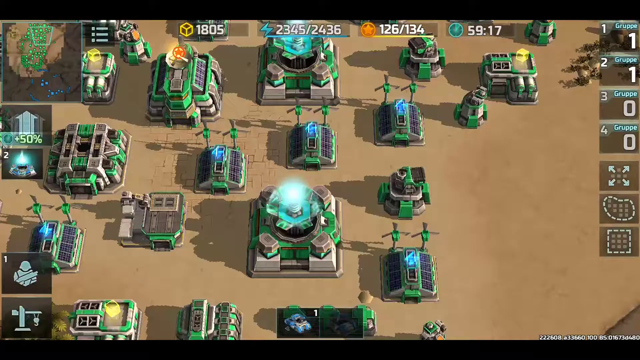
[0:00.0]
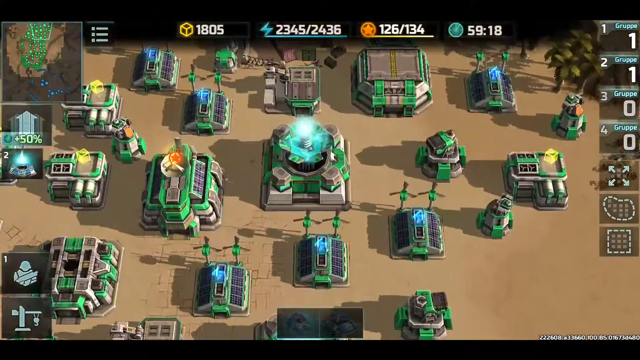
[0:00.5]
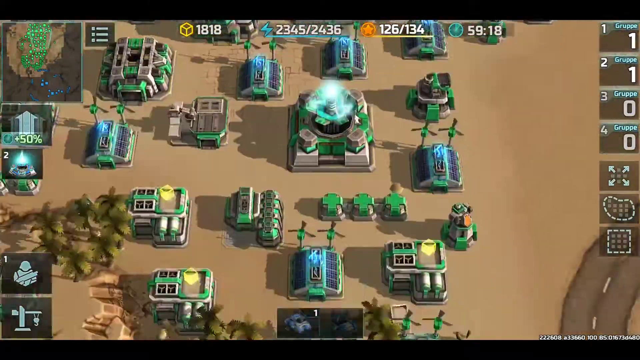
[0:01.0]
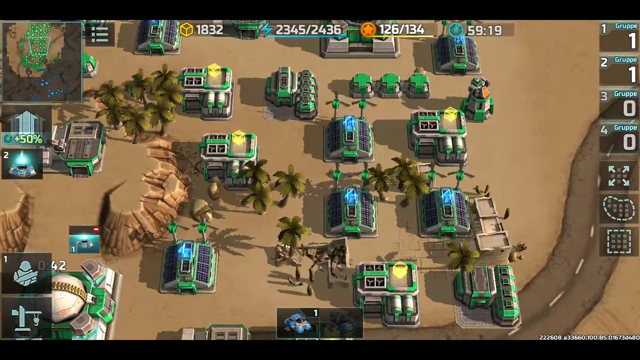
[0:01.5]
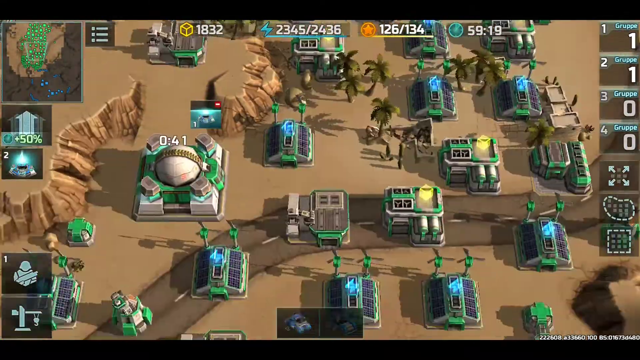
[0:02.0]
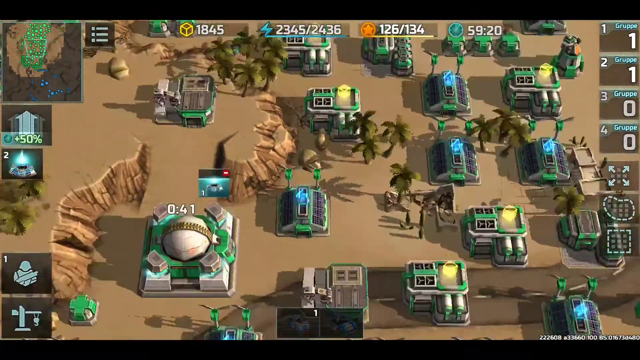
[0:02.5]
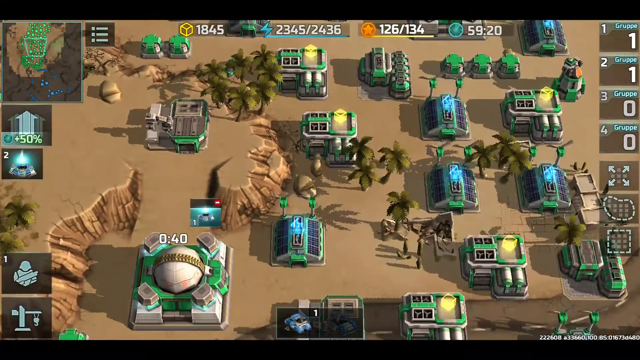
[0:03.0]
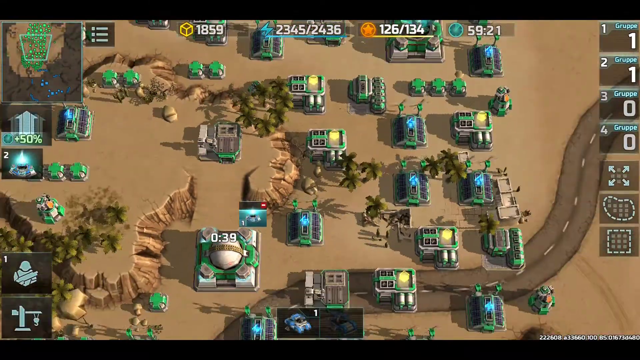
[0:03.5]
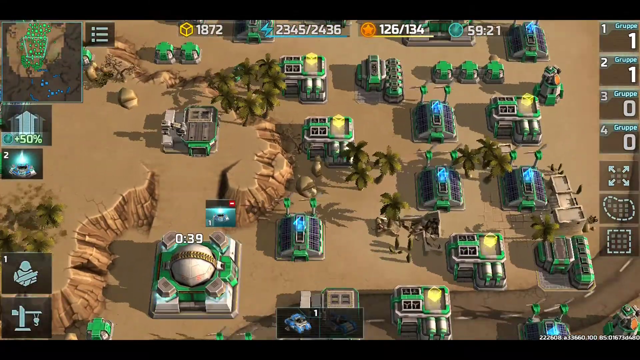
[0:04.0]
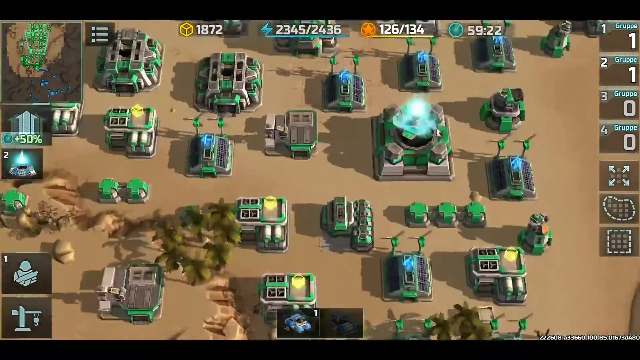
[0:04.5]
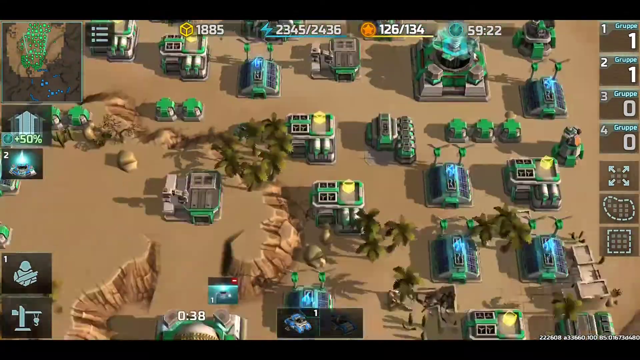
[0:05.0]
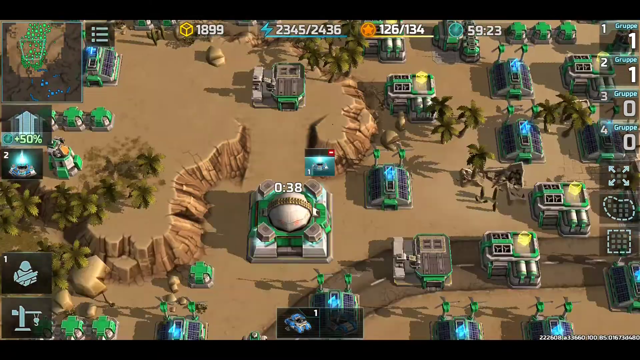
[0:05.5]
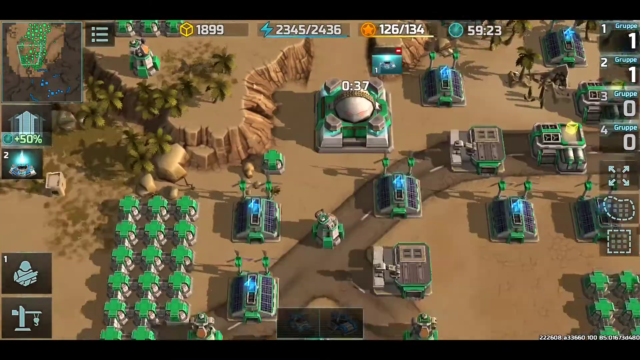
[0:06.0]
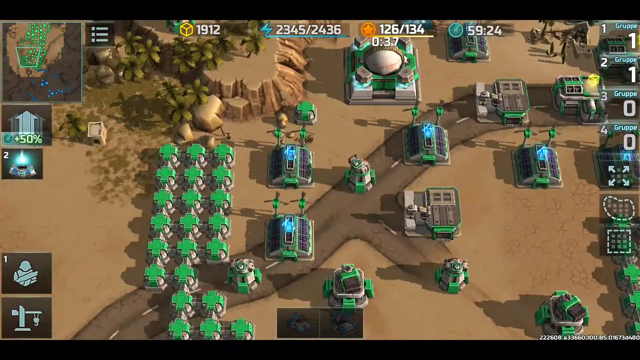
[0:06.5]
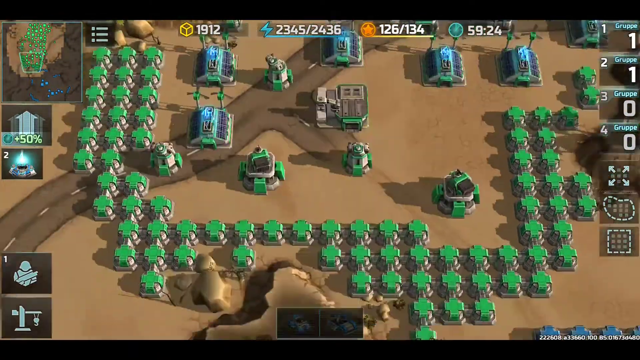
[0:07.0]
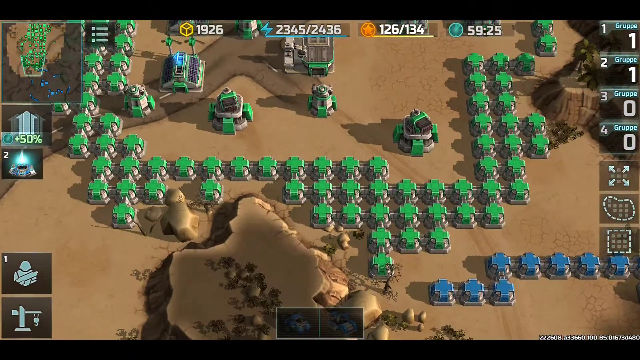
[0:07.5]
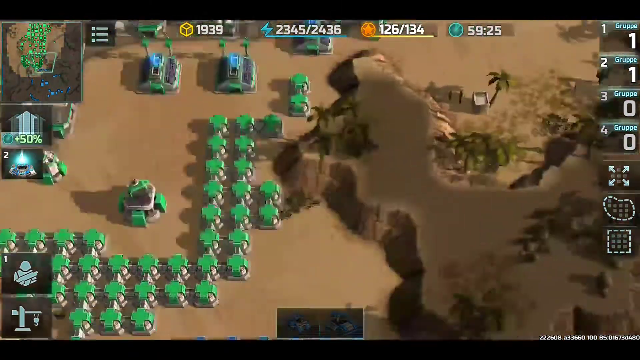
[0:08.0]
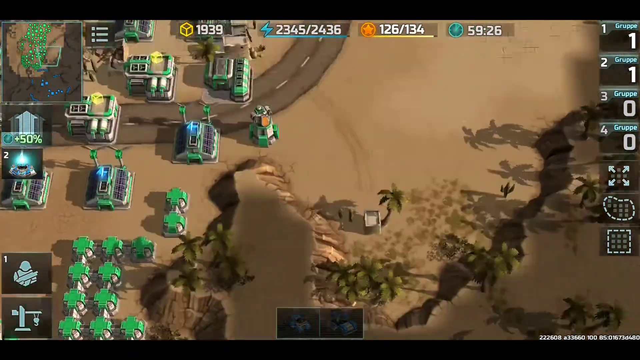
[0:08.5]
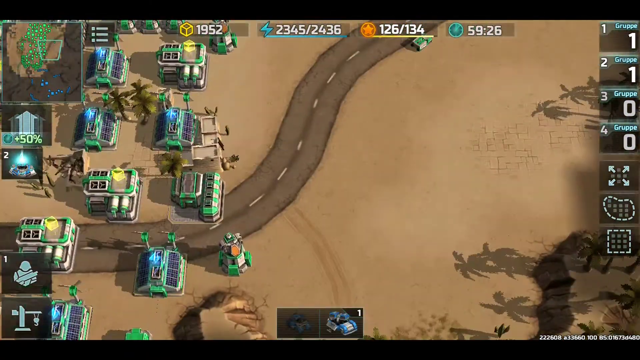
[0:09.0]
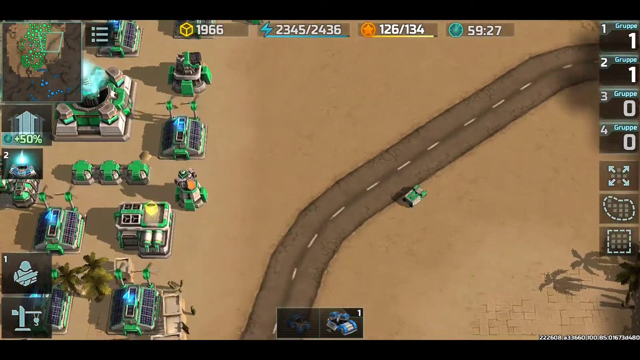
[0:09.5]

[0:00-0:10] The video game is set on a brown background with little houses that have little propellers on them, situated almost like they are in a neighborhood. The game lets the viewer see the board, and the view surveys it up and down, left and right. The territory has a road and cliffs, and there may be some trees between the buildings. One section has no development on it. In the upper left-hand corner, the same terrain appears on a much smaller map, and as the view of the terrain moves, a shaded area within that little map moves with it.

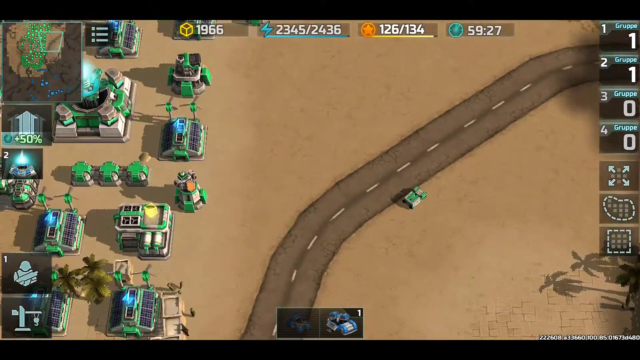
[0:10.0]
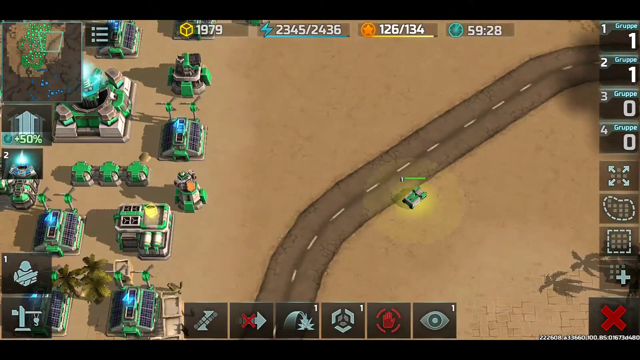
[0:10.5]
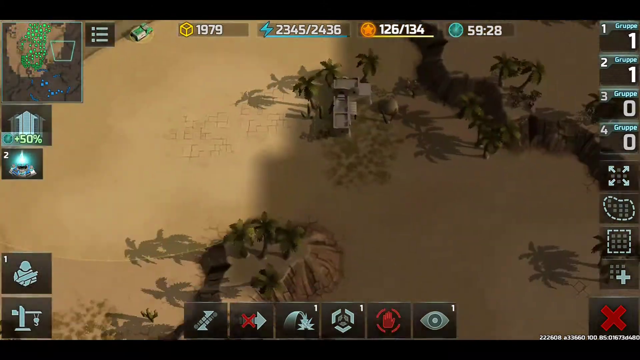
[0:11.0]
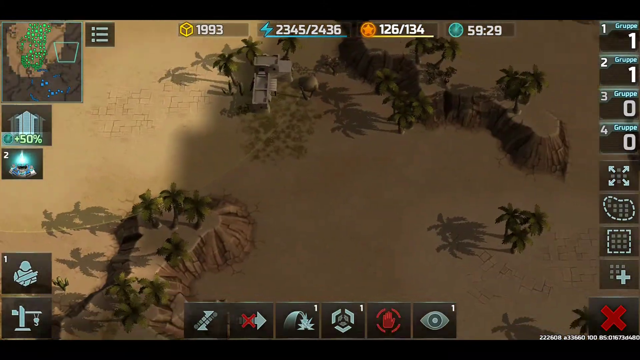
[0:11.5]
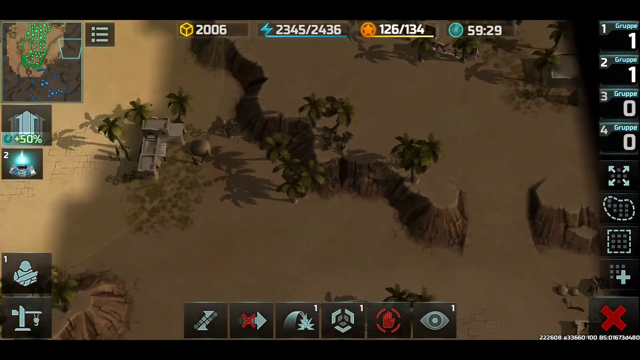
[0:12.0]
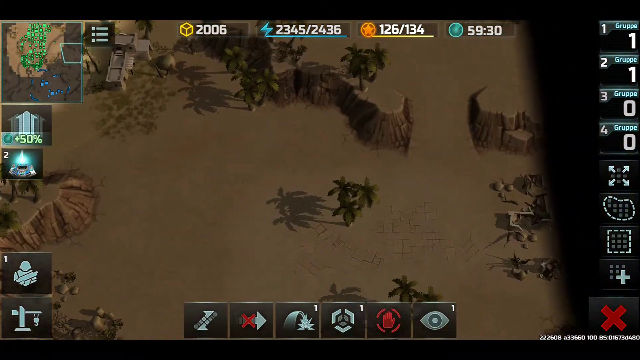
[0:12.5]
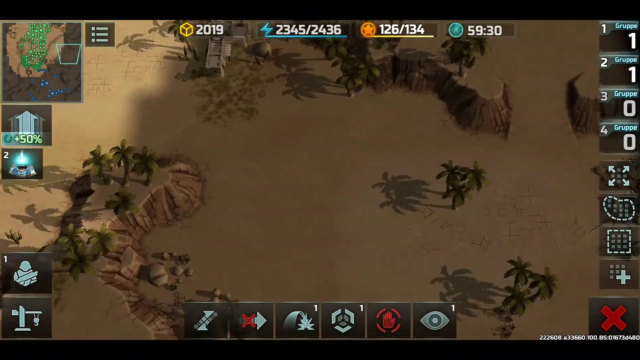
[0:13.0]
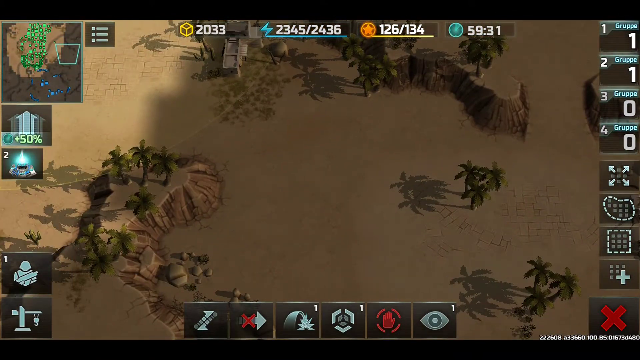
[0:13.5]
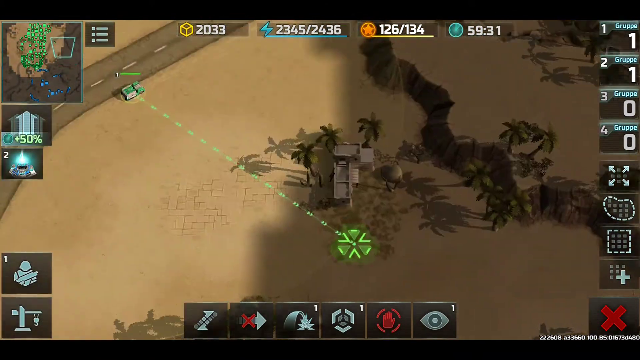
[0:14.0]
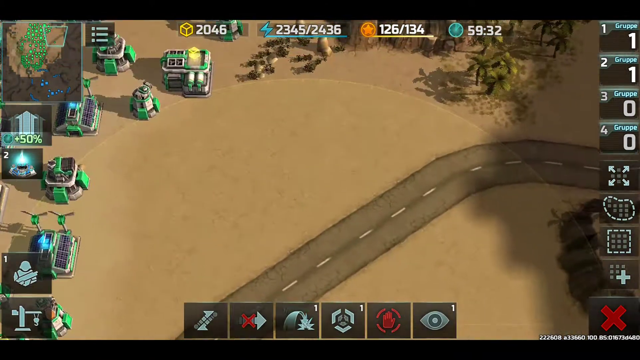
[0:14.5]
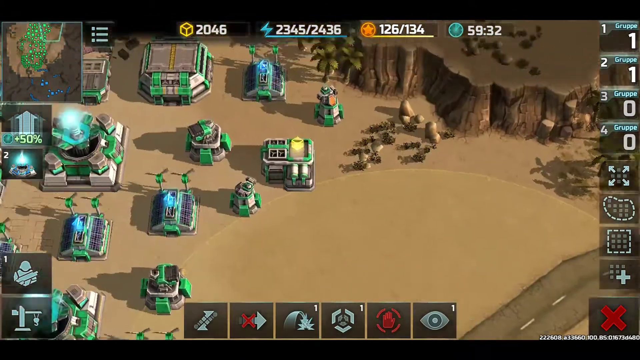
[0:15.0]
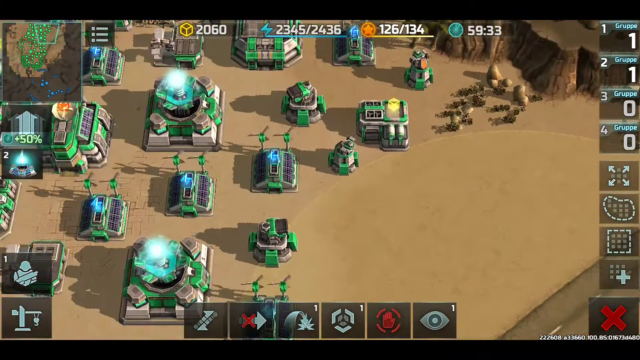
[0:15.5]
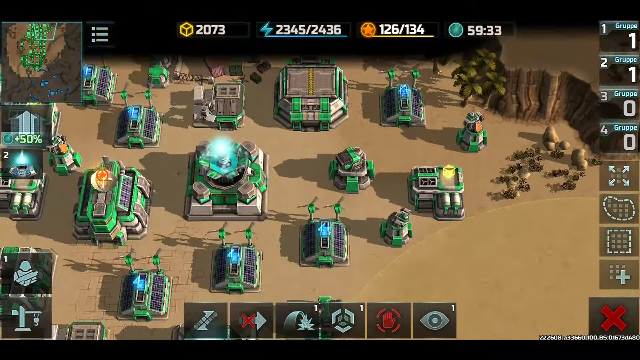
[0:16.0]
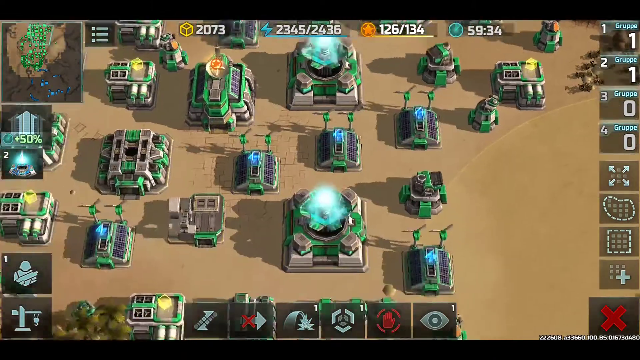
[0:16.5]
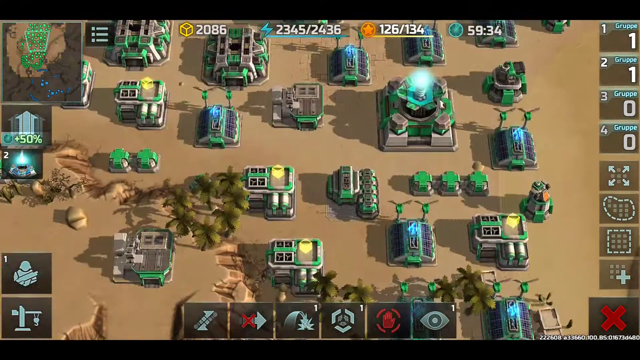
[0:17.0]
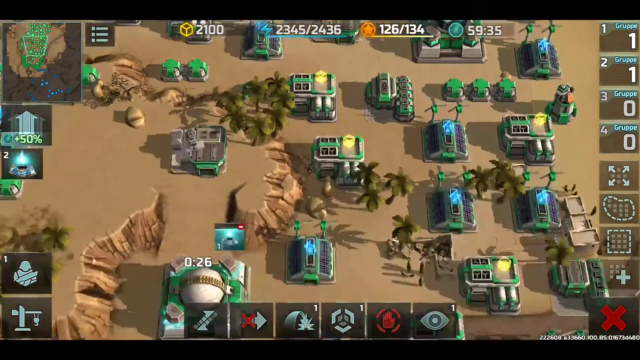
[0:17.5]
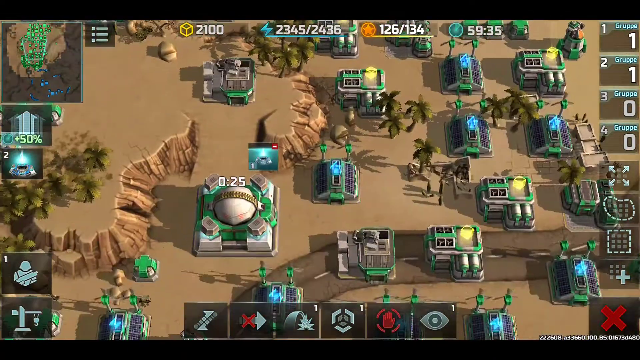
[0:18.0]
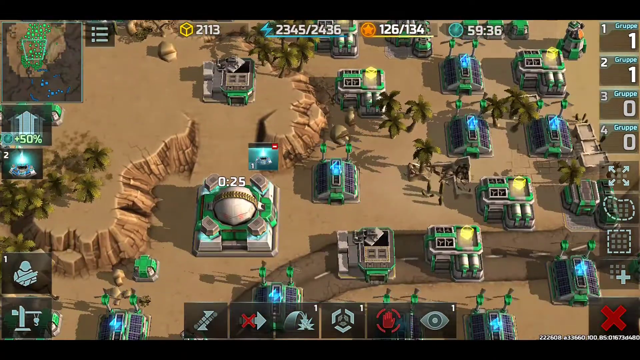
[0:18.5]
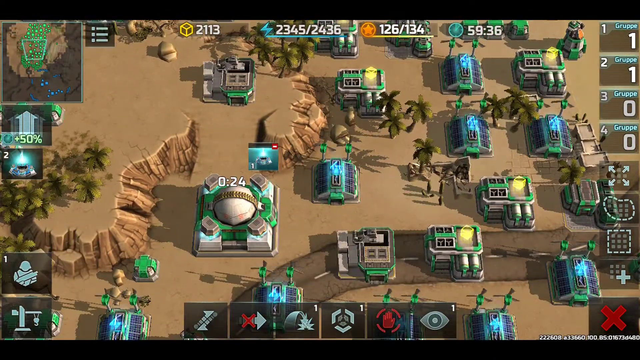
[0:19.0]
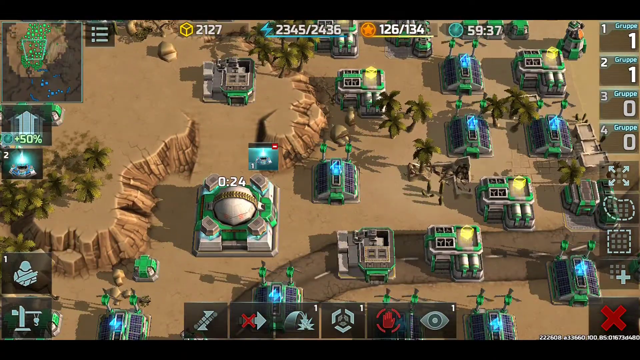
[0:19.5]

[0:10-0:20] The video game is played on a territory with a brown base and little houses and buildings on it. The buildings look like they have little spiral, almost helicopter-type turning tops. The view looks over the territory. A green light goes out and kind of illuminates the middle of the field. There is a car that looks like it drove off the roadway, and scores are shown up top. The terrain is not completely flat: there is a little cliff and some trees. The bright light almost looks like ammunition that was shot out.